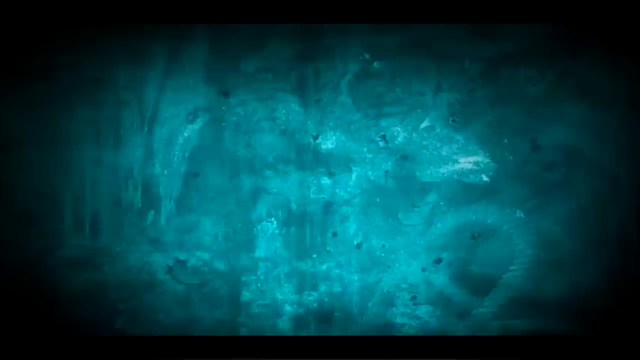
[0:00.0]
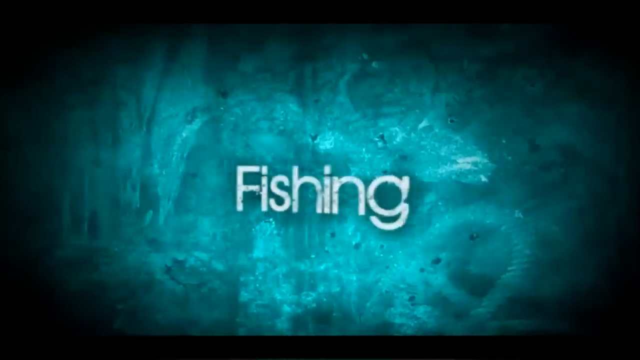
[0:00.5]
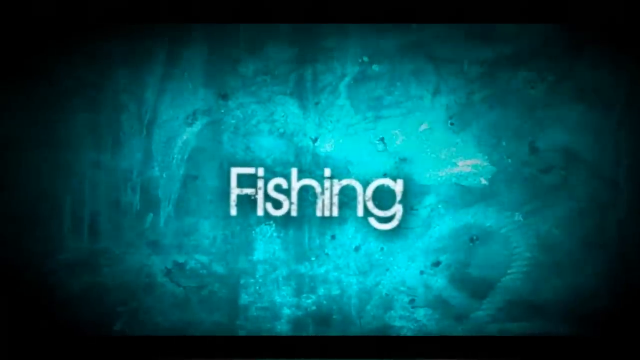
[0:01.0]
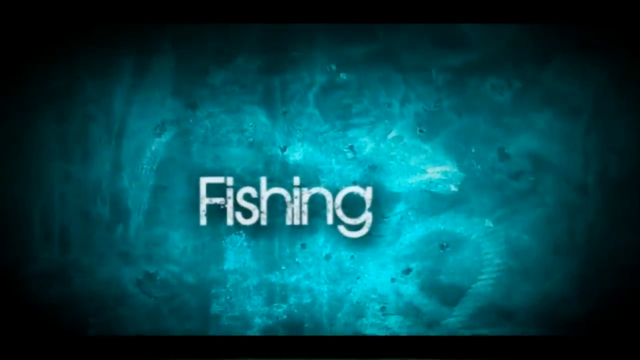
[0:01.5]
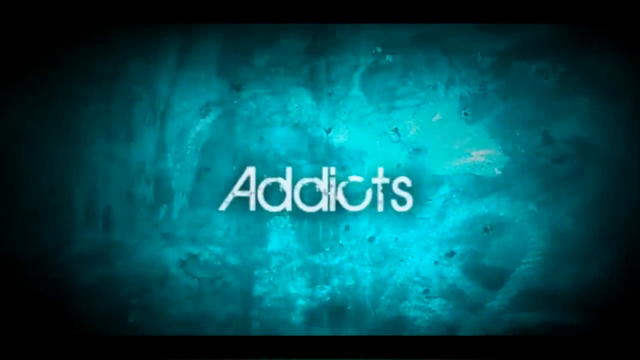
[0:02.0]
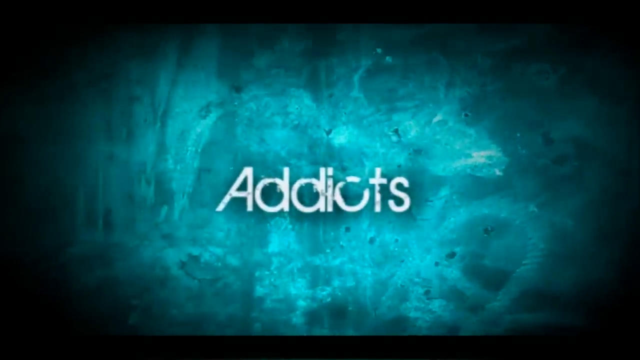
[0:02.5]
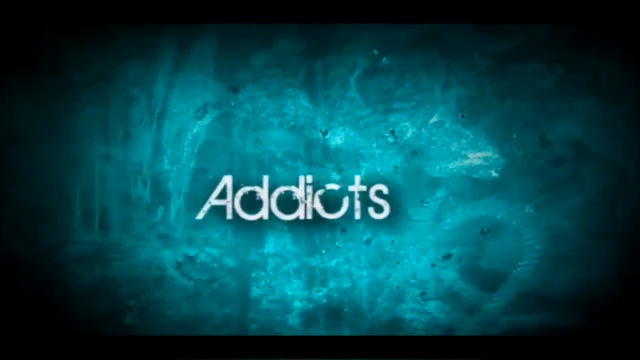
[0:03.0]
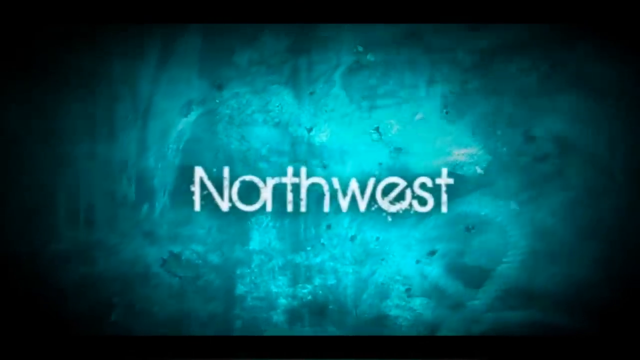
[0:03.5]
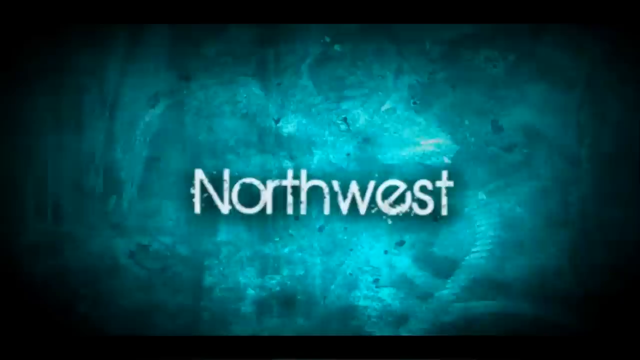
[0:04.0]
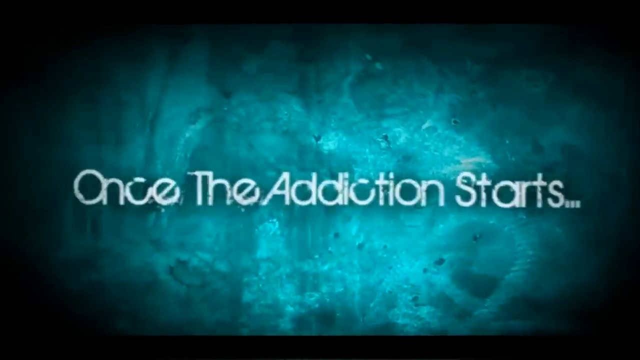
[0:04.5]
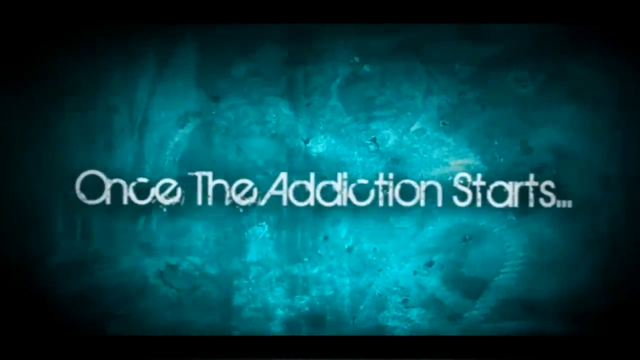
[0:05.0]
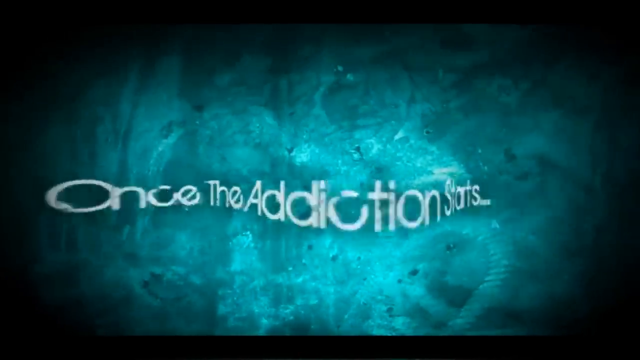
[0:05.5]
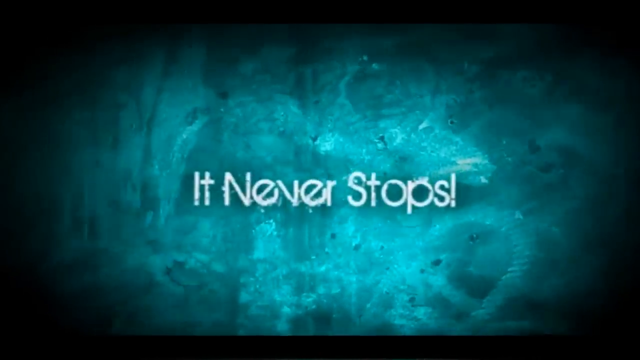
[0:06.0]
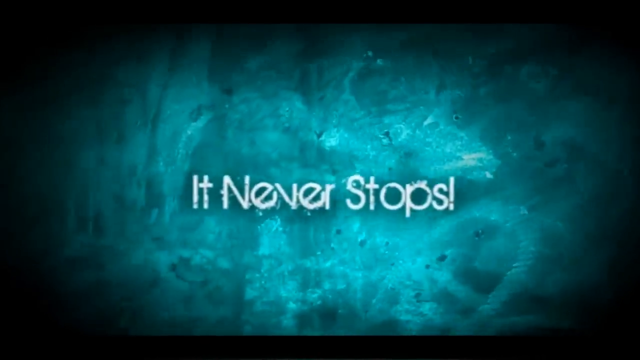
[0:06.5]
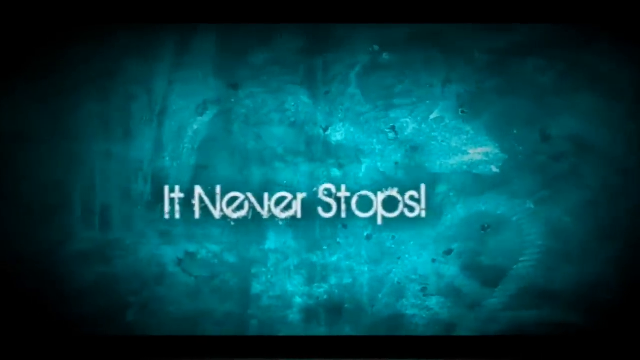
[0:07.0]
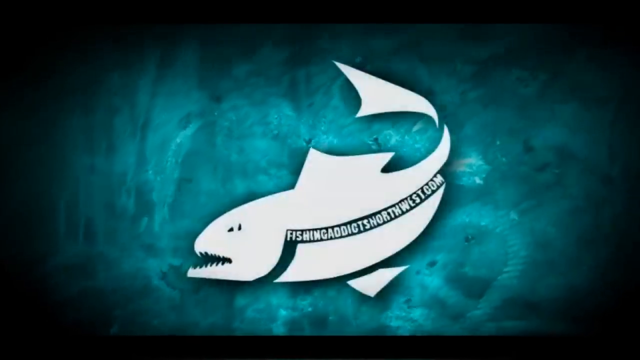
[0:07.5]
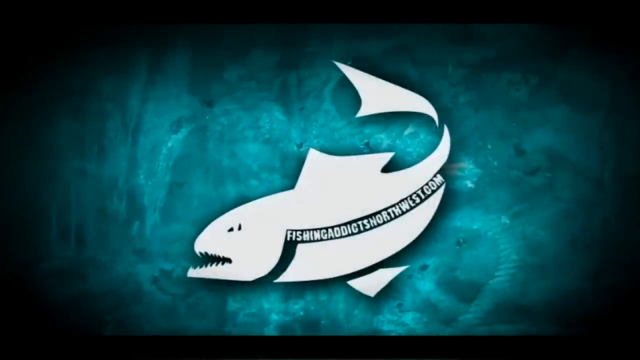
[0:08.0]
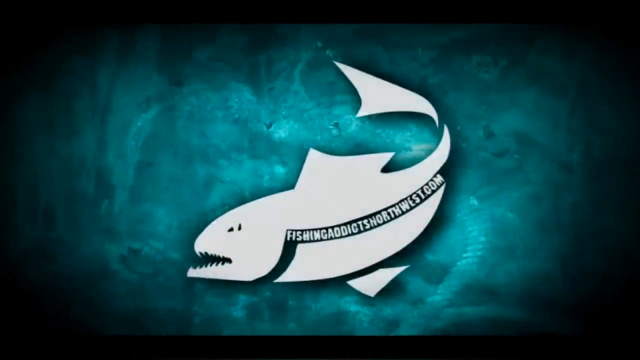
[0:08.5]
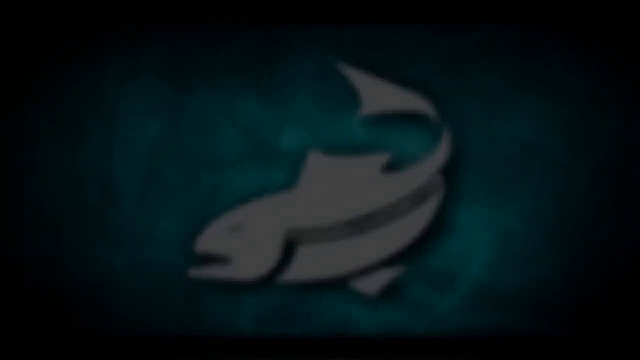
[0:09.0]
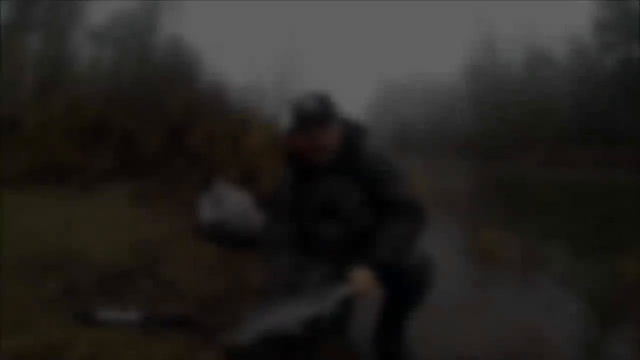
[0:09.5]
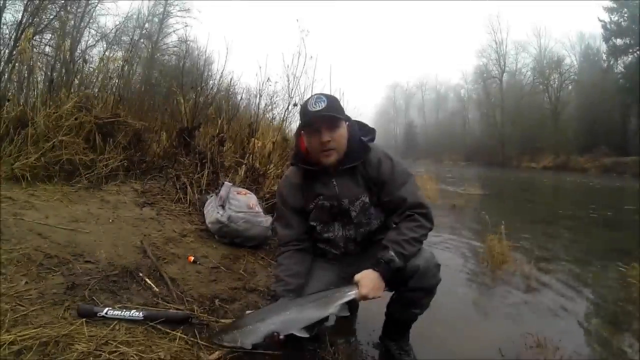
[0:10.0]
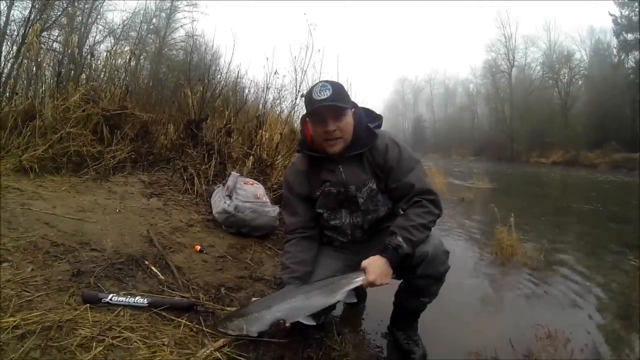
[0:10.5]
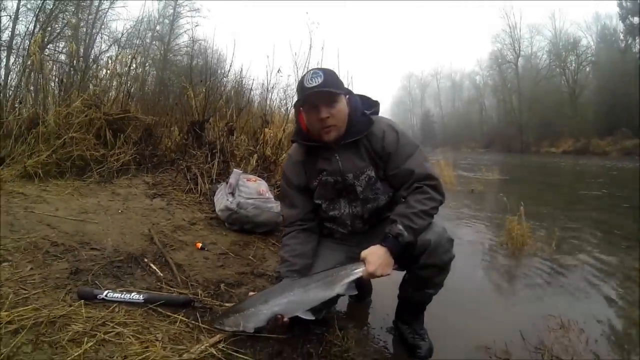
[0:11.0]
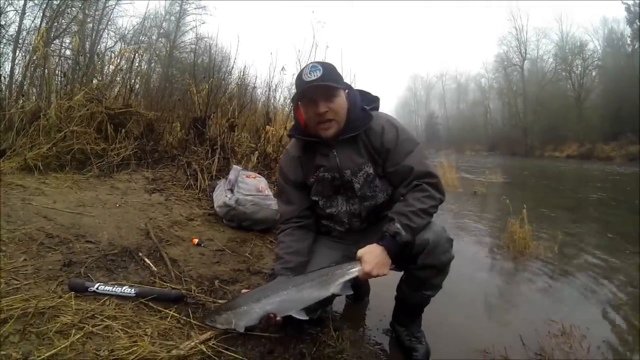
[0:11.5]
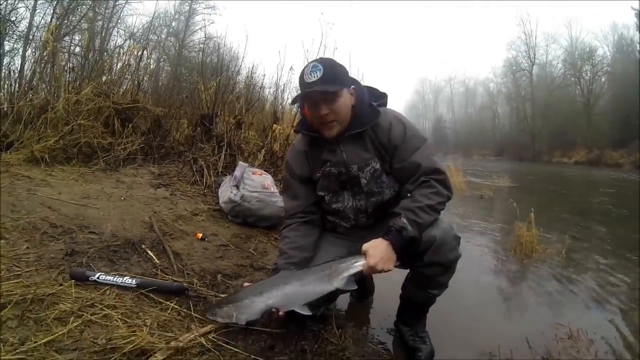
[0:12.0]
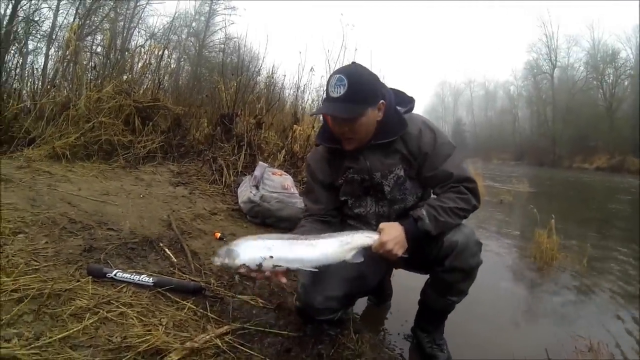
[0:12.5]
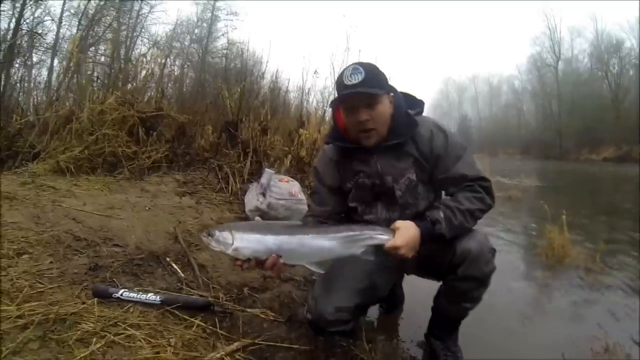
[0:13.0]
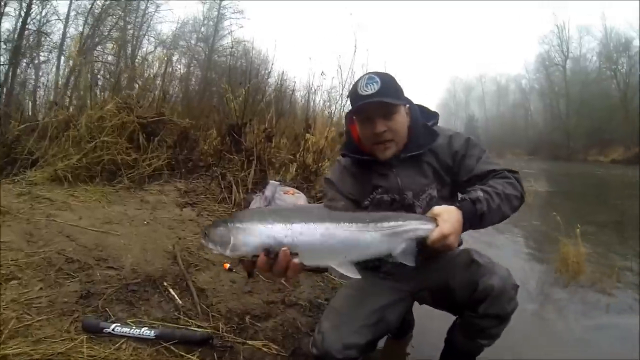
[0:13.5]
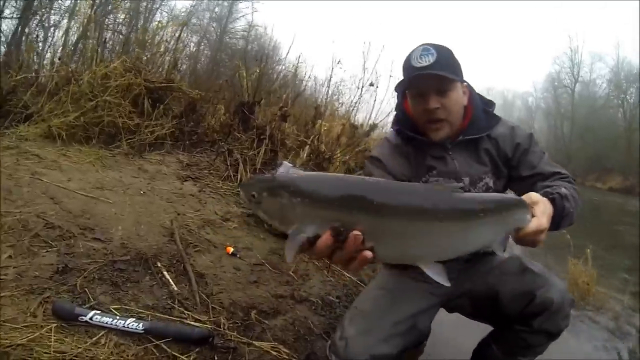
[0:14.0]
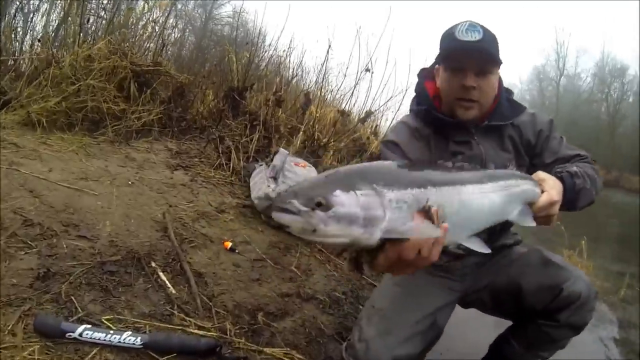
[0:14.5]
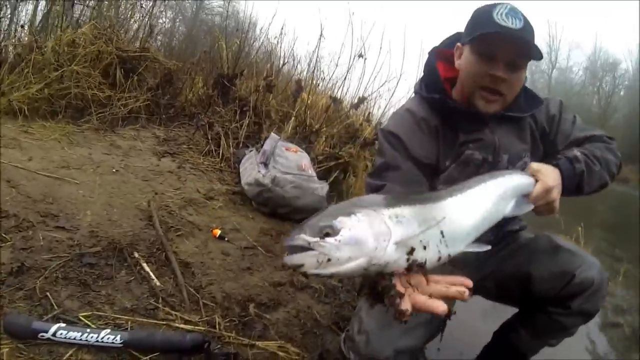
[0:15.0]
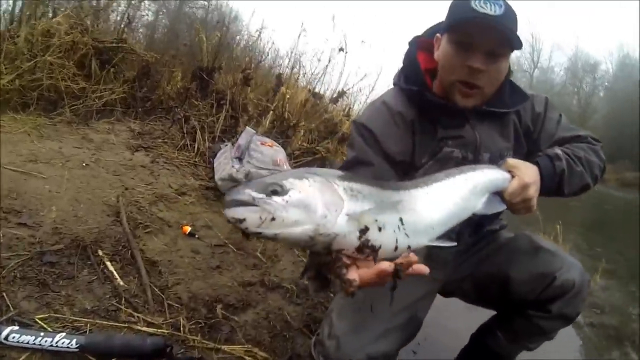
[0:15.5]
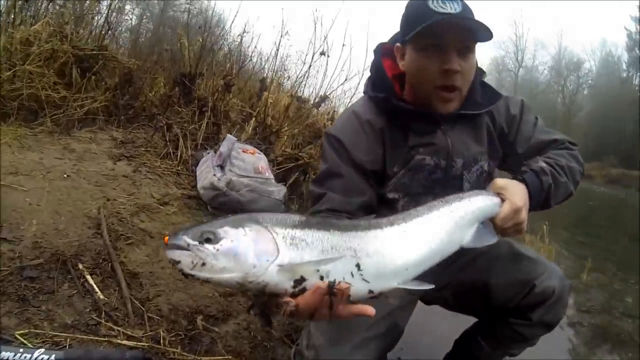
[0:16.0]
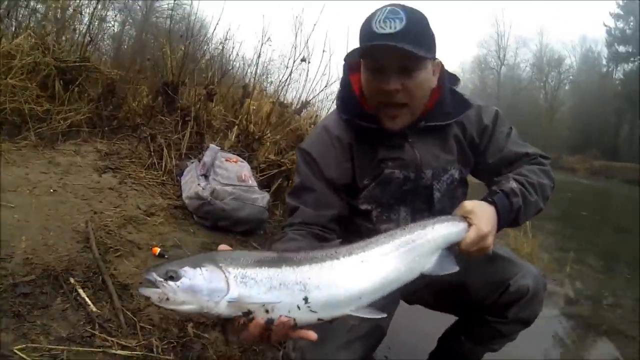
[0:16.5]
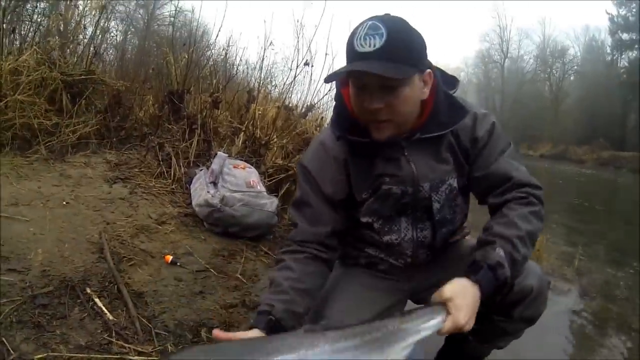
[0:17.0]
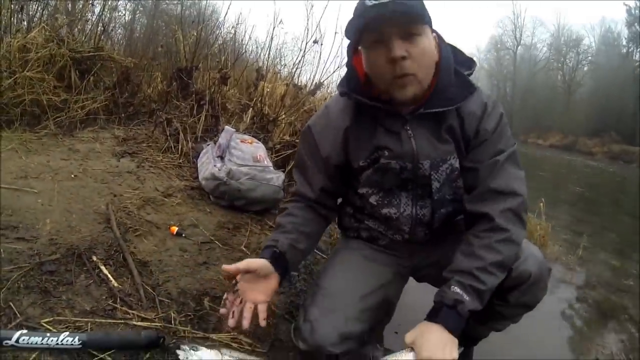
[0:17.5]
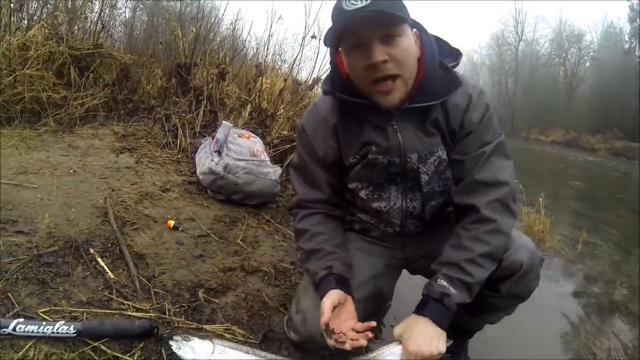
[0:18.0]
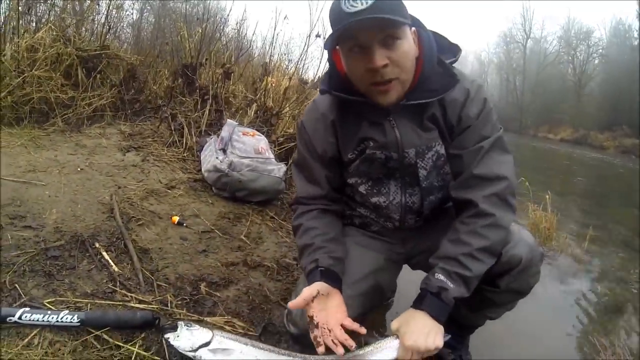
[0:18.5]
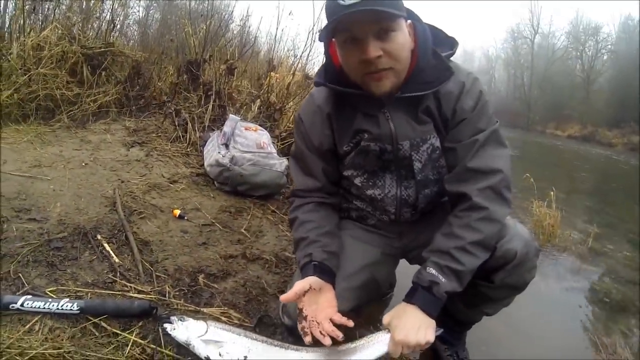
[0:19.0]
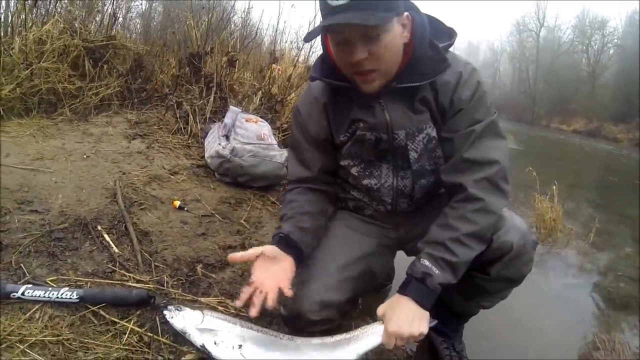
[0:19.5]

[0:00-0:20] The video opens on a blue screen with a white fish emblem at the front, described as being for Fishing Addicts of the Northwest. It quickly moves to a man in a camouflage coat, gray pants and a baseball hat who is kneeling in a river, showing off a very large silver fish he has caught. On the bank of the river there appears to be a bag behind him, and possibly a knife or some tools on the ground next to him. He seems to be talking about either the size of the fish or what to do once one is caught.